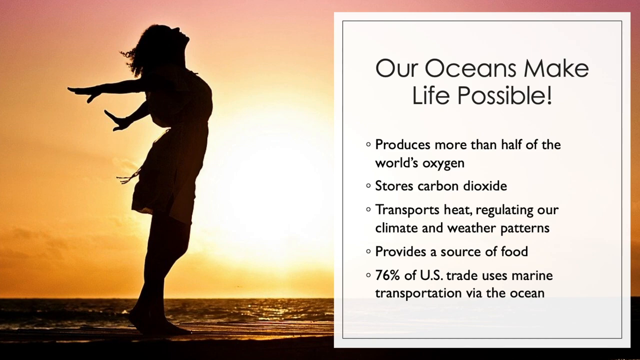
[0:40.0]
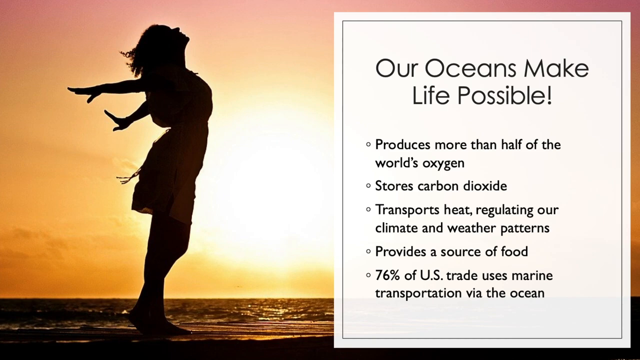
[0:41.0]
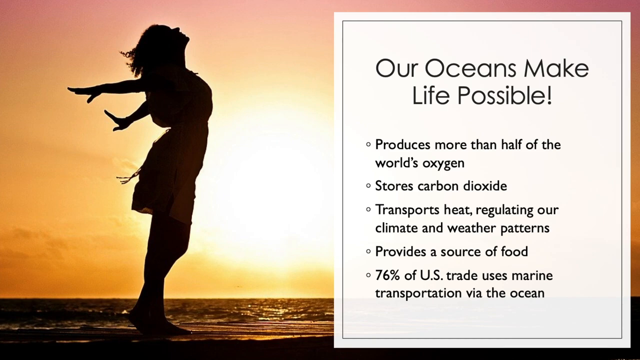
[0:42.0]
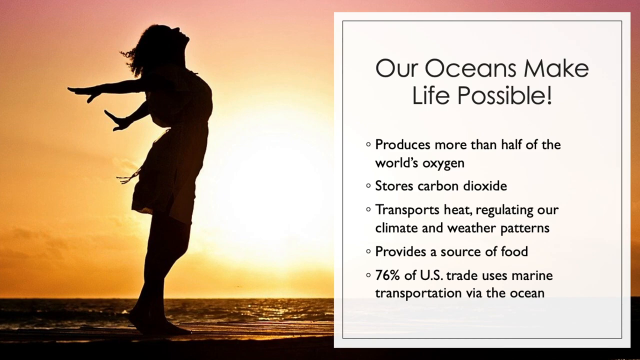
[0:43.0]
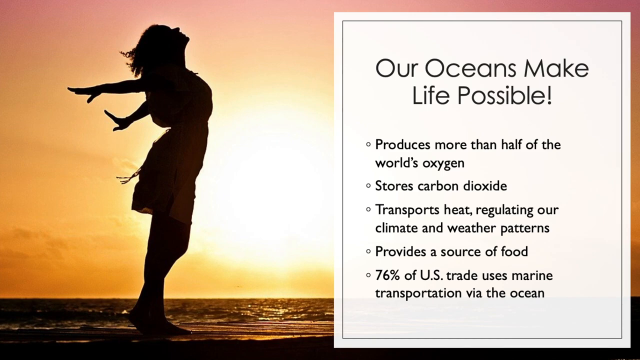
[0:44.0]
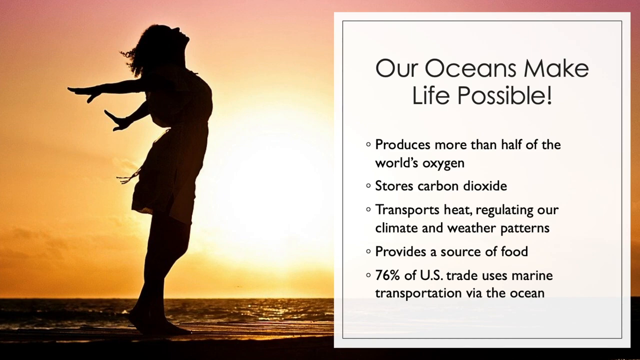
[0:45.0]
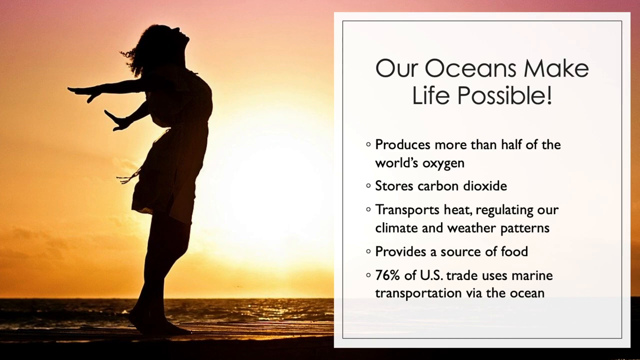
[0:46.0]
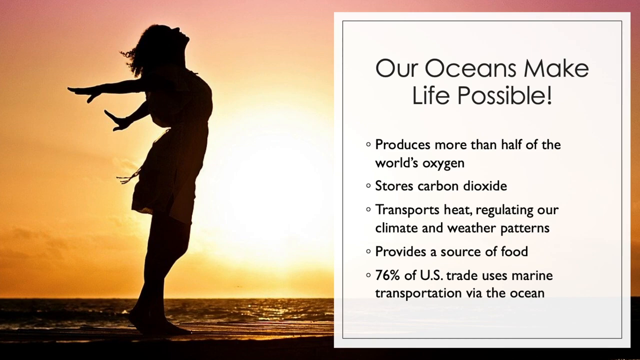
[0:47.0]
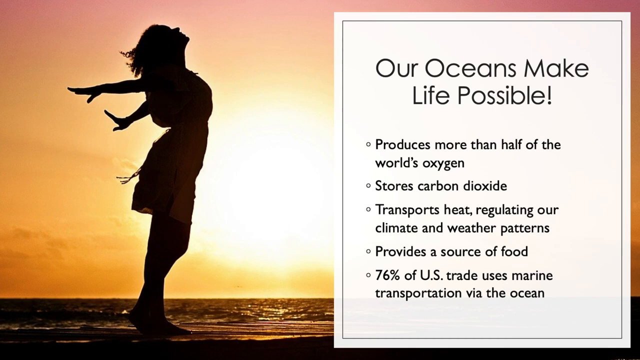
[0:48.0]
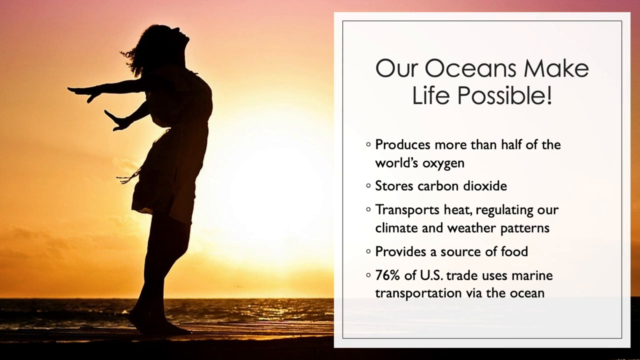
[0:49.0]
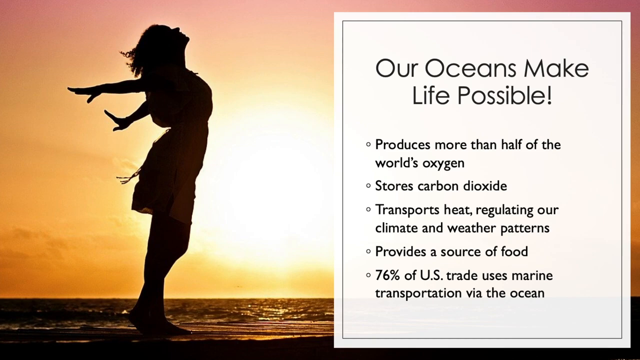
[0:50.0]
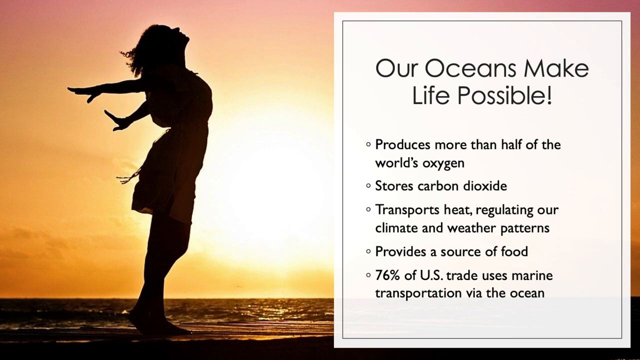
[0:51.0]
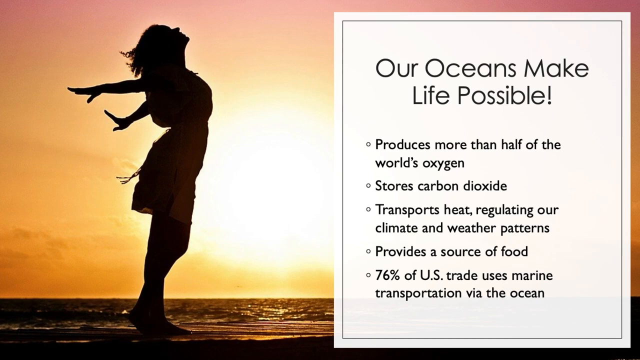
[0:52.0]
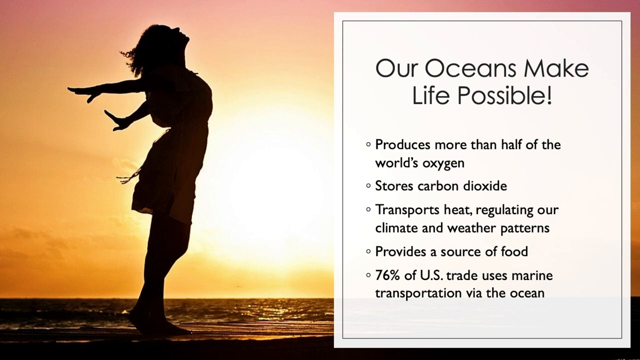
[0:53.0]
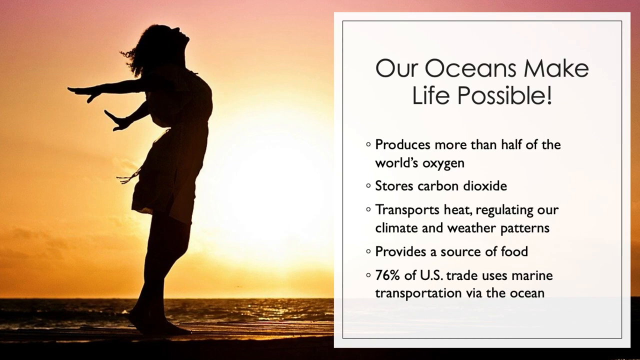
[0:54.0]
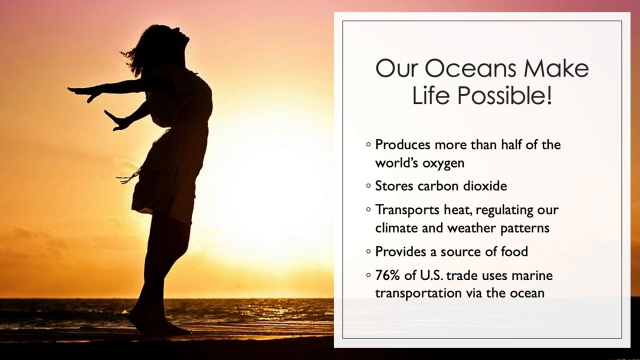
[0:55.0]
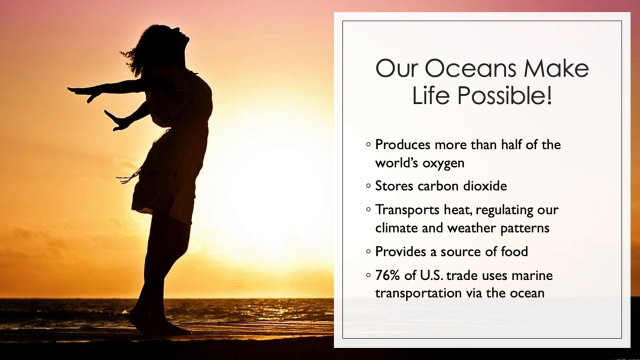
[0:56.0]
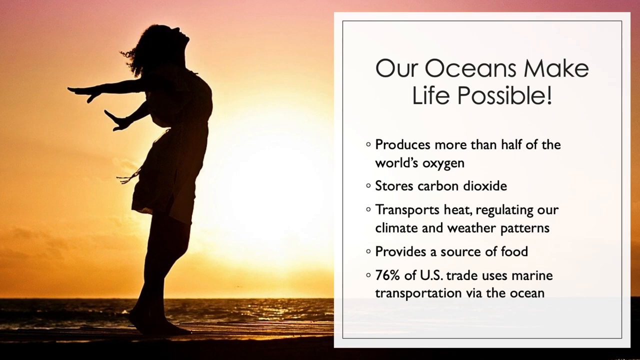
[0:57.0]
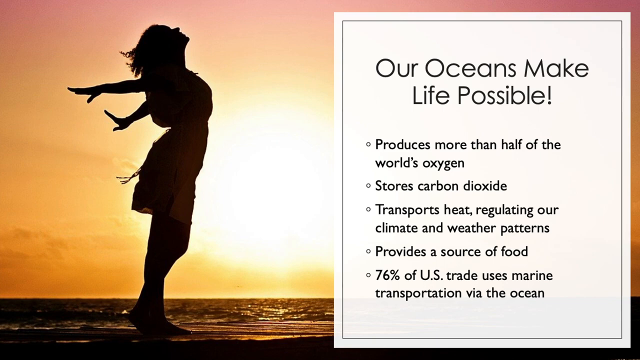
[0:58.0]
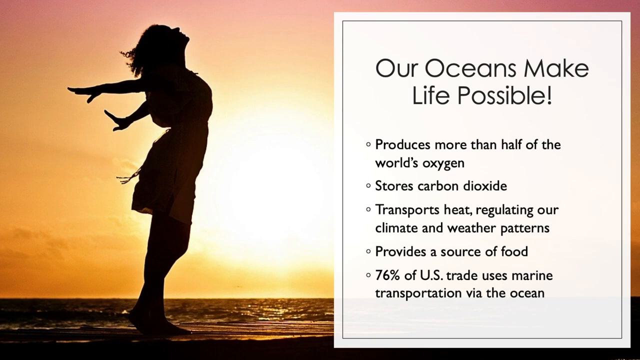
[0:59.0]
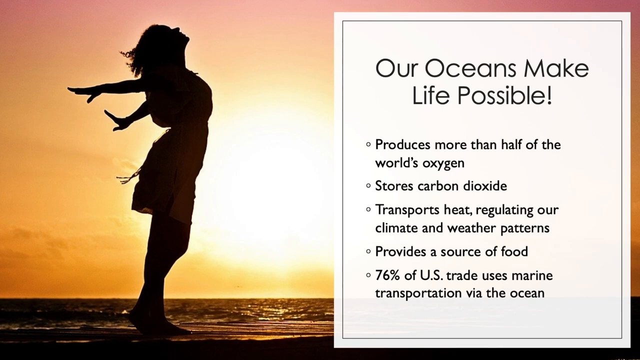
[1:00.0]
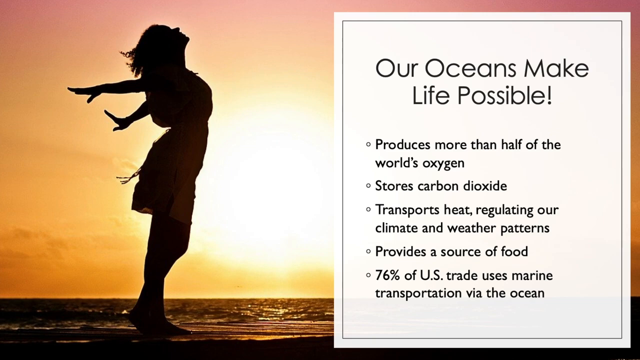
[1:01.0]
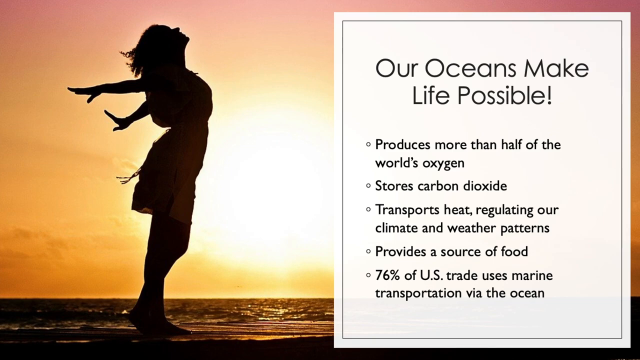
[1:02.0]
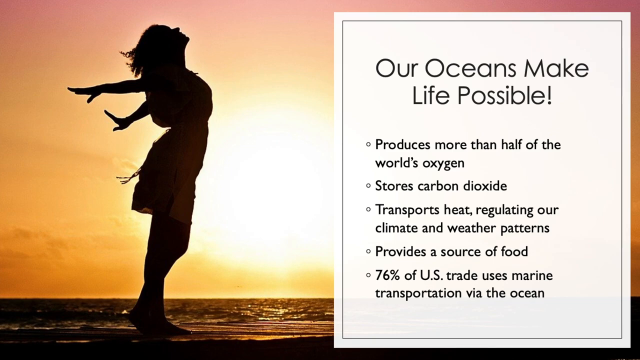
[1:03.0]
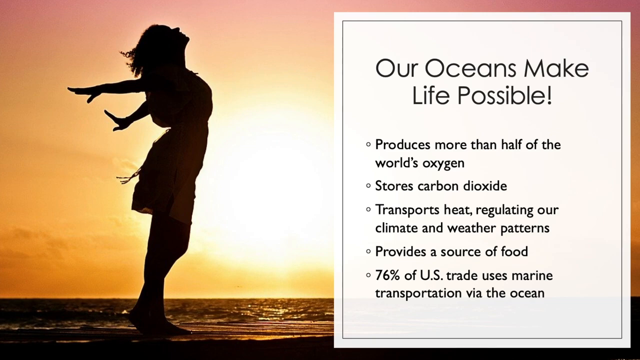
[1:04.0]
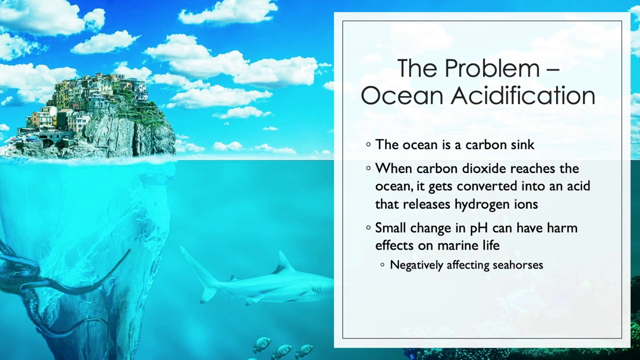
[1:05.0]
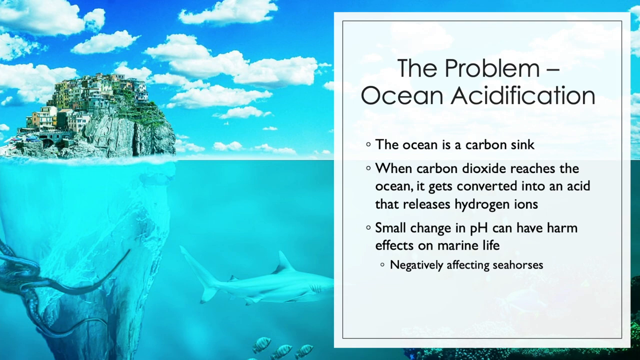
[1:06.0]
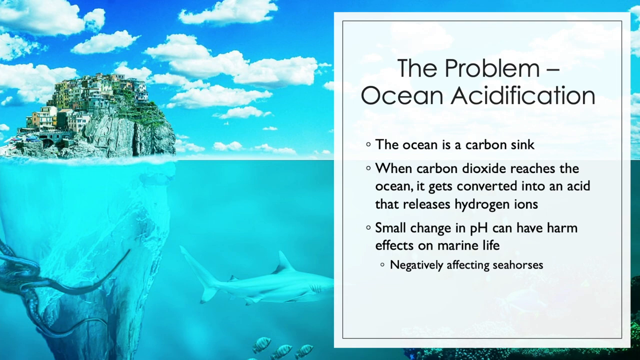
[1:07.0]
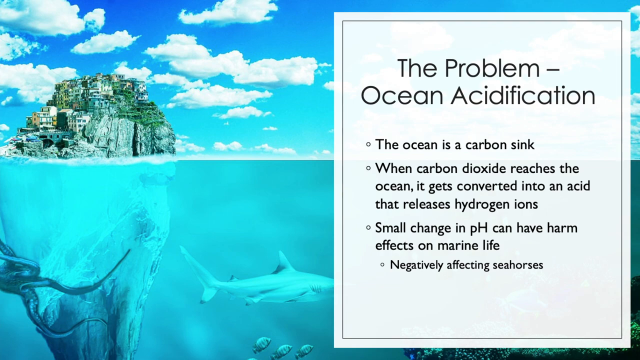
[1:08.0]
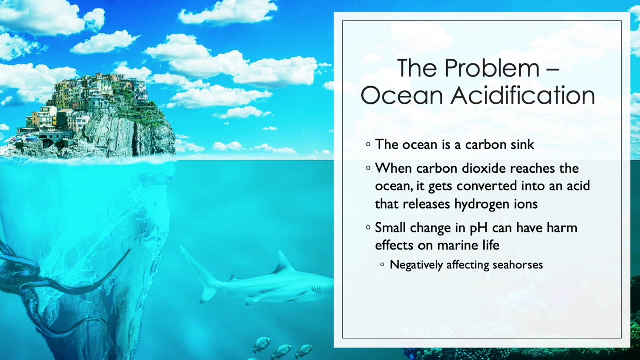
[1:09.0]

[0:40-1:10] The silhouette of a woman looks up at the sky, with a sunset behind her: the sun is white and the sunset goes from peach to yellow to orange. What seems to be the ocean is behind her, right below her feet. To the woman's right is a rectangular box with a gray border containing the black text "Our oceans make life possible!" Below it are five bullets in smaller black text: "produces more than half of the world's oxygen", "stores carbon dioxide", "transport heat, regulating our climate and weather patterns", "provides a source of food", and "76% of US trade uses marine transport via the ocean". In the last few seconds it transitions to another slide of the same design, with text in a white box on the right and an image in the background.